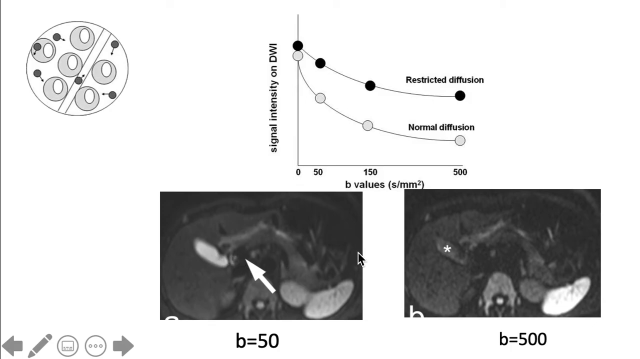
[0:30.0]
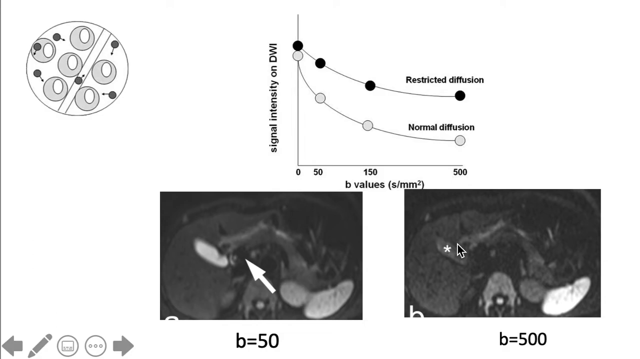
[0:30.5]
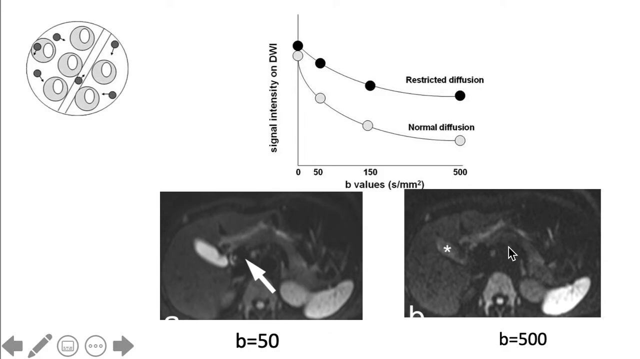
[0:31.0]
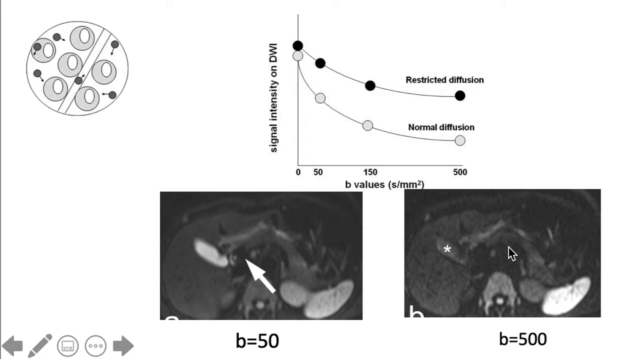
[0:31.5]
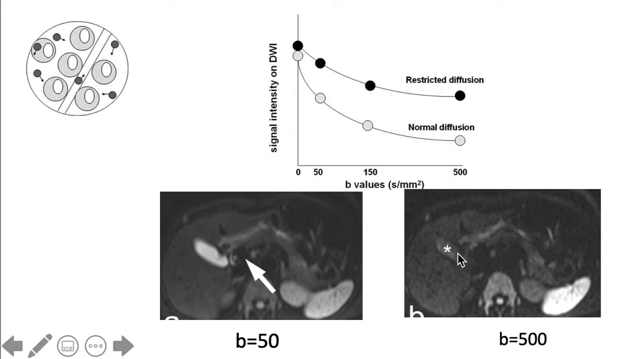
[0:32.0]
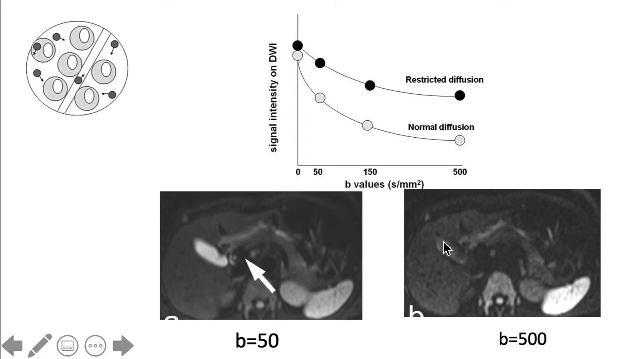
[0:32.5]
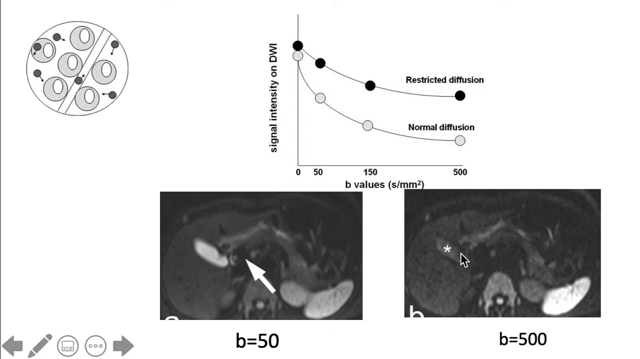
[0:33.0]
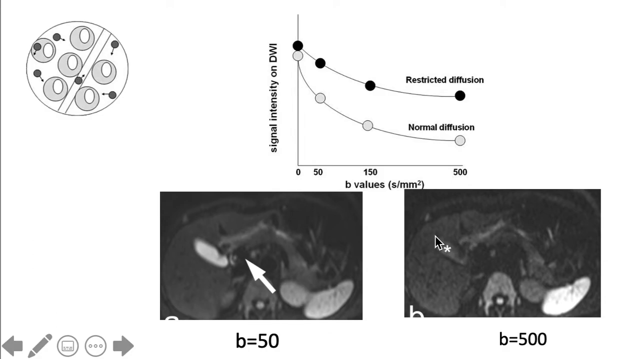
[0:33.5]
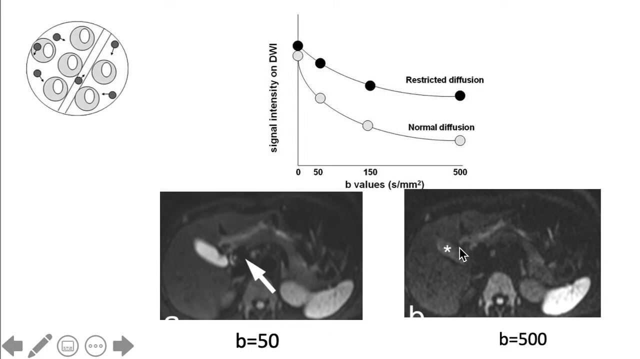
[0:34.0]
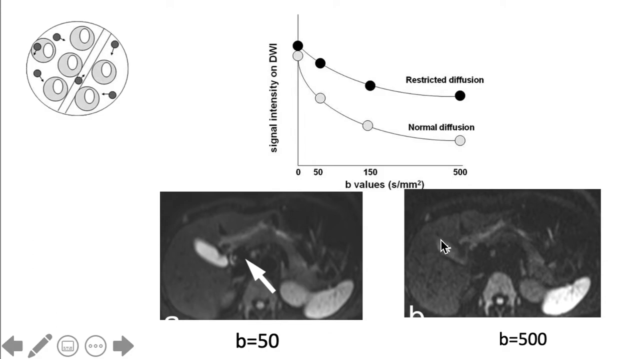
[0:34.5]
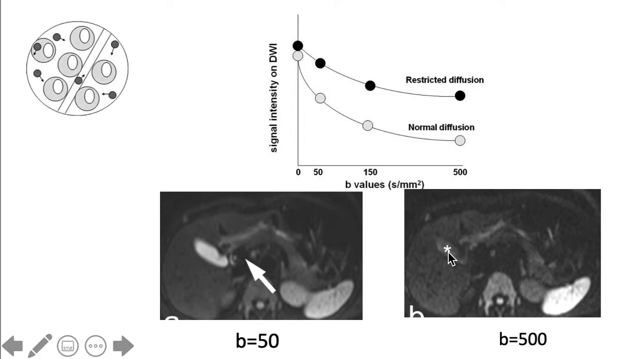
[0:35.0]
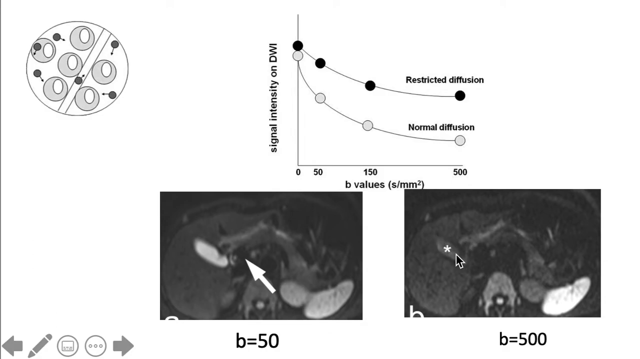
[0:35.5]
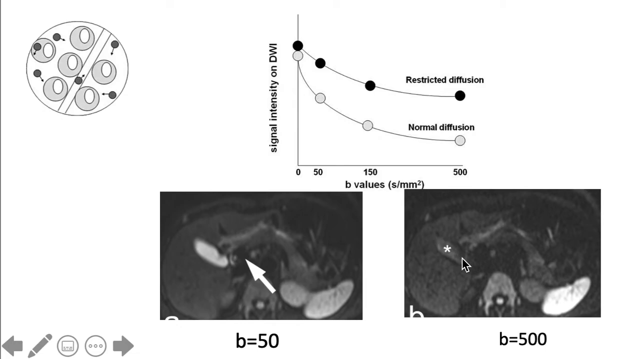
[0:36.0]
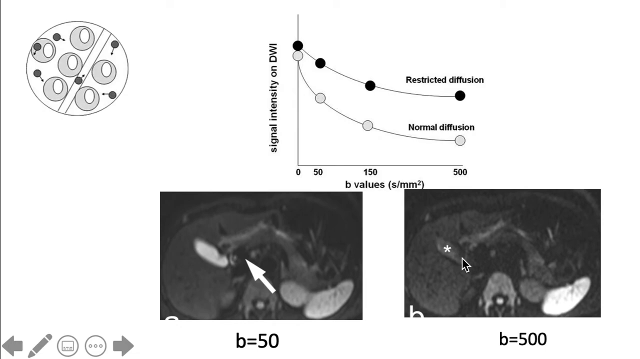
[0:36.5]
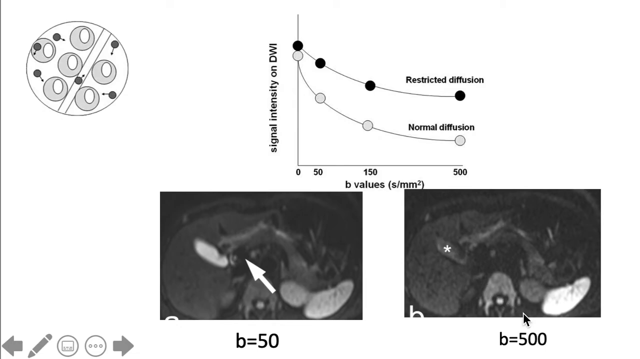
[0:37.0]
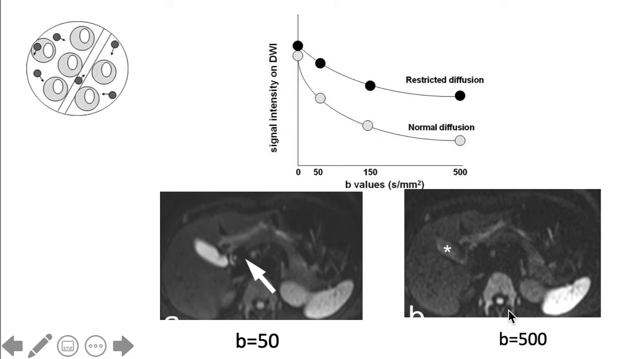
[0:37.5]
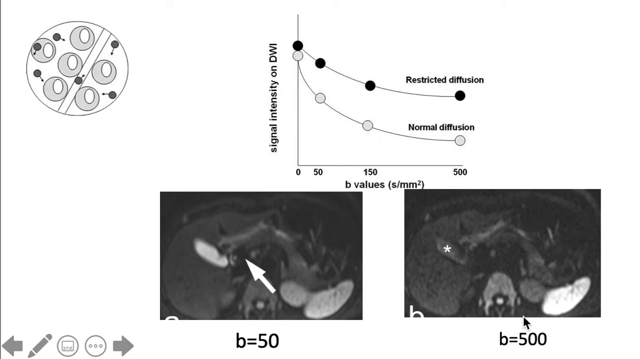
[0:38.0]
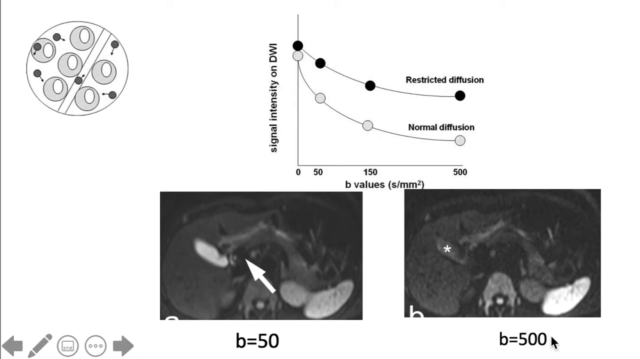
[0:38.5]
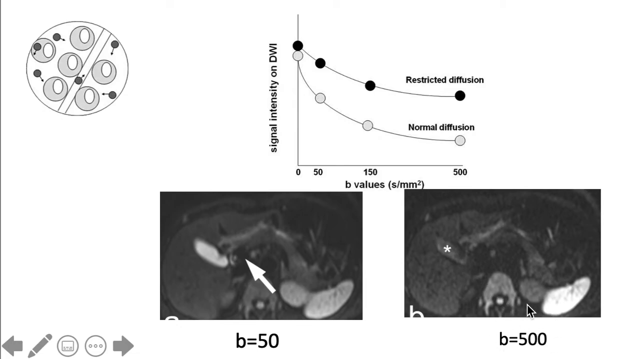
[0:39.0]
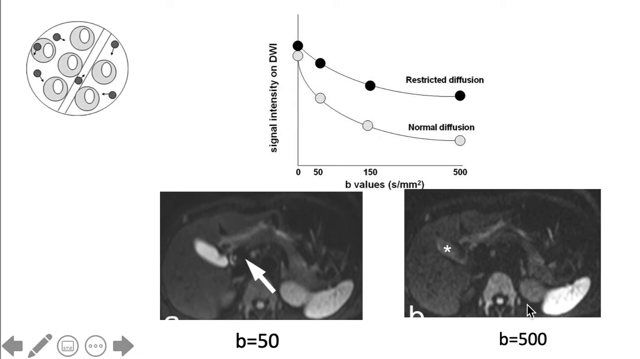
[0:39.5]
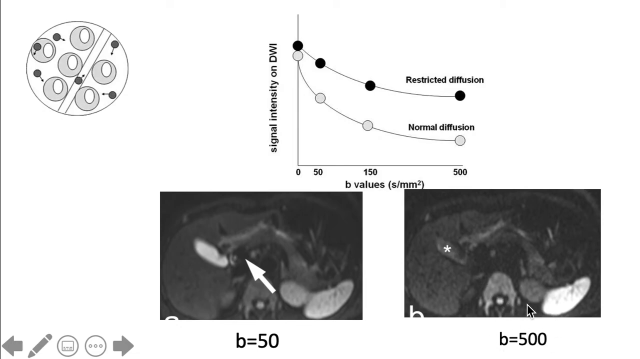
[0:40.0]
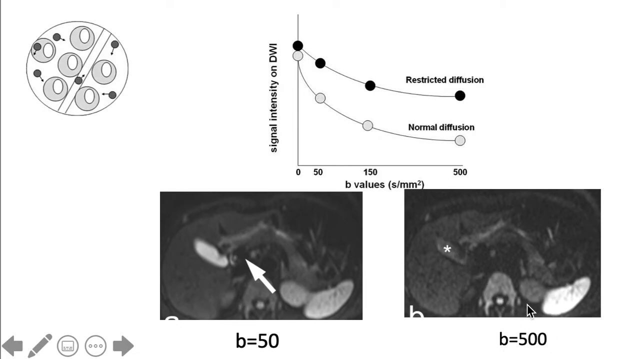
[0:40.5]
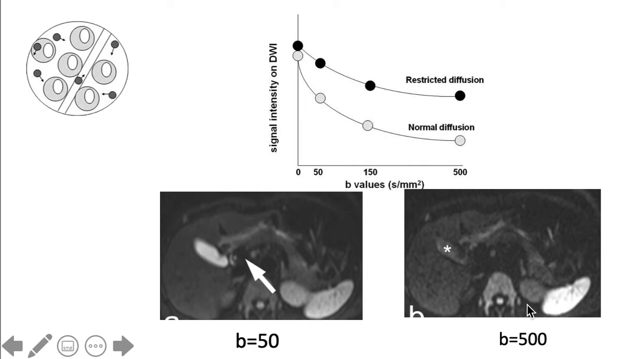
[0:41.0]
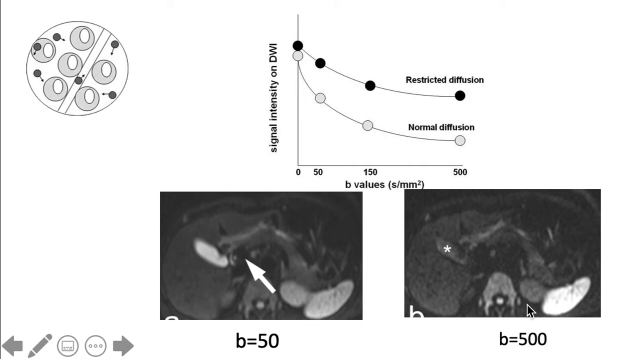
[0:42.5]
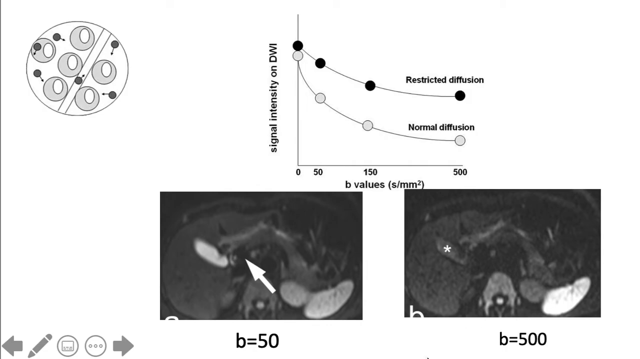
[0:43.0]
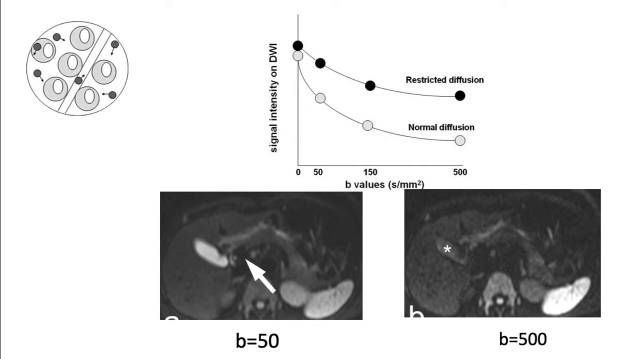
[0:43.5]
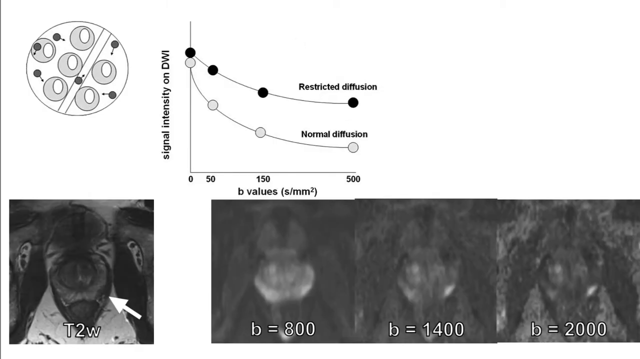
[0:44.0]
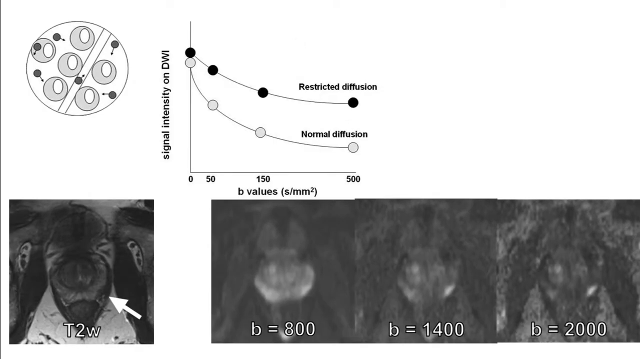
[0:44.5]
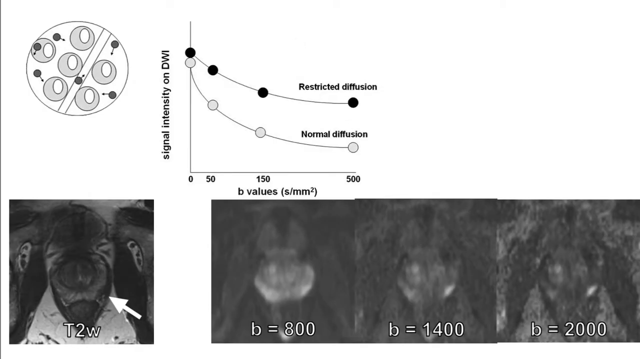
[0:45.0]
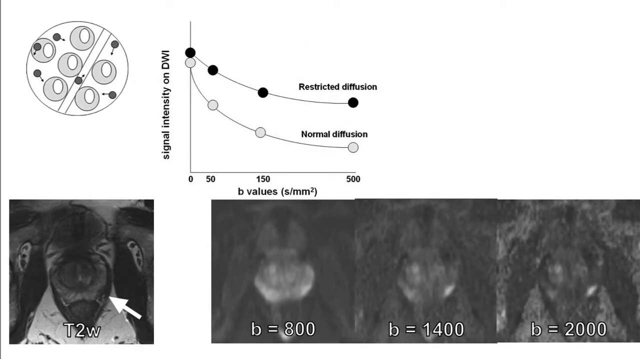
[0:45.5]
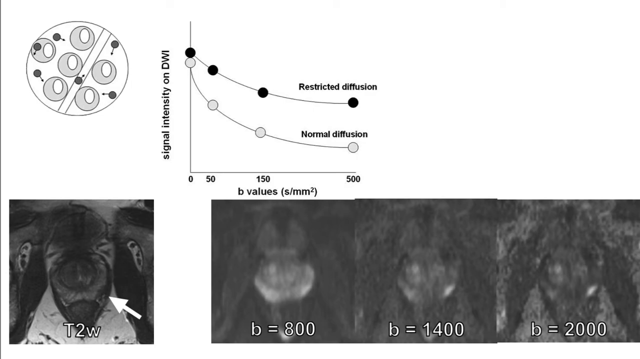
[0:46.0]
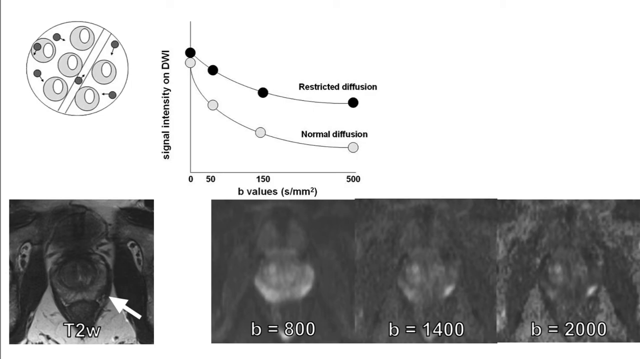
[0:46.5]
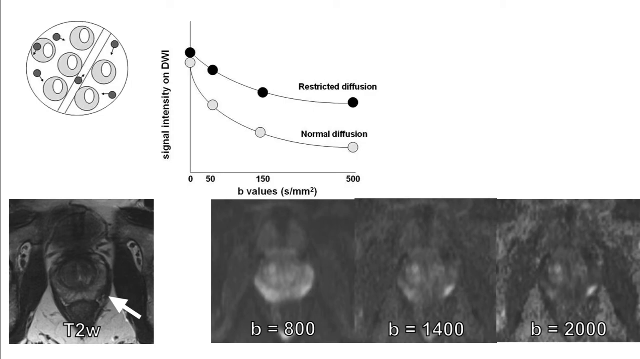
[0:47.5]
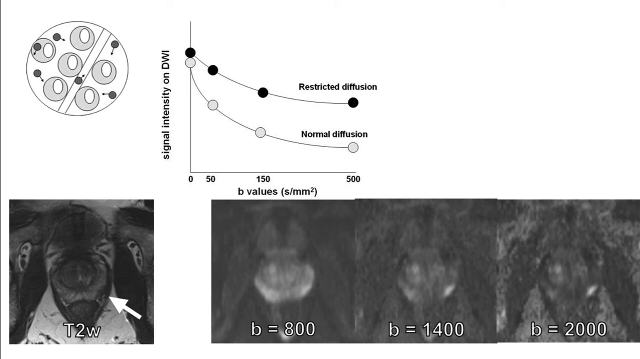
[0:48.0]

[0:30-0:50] Several gray diagrams are set against a white background. A small graph has labels including "restricted diffusion" and "normal diffusion," and on it small circles are strung together by thin lines. A cursor moves across the screen, indicating certain areas such as the lower right-hand corner. The screen then changes, and instead of two micrographs or x-rays there are four: one in the bottom left-hand corner and three situated more closely together in the upper right-hand corner. In the upper left-hand corner is a circle with several smaller circles inside it, light gray circles and small black circles. Everything is set against a white background, and there is not a lot of motion.